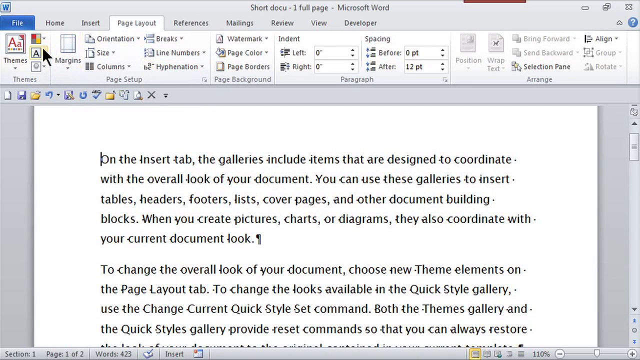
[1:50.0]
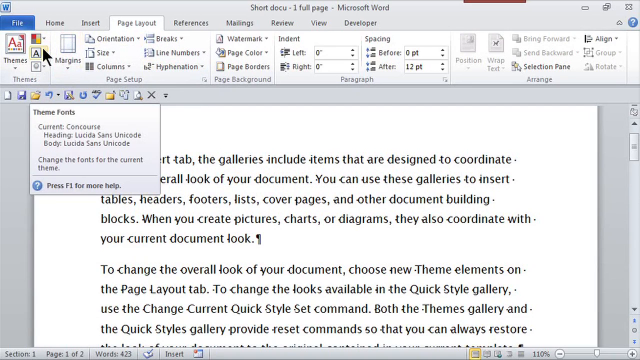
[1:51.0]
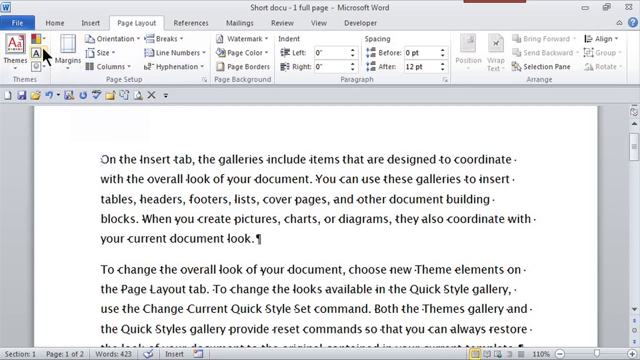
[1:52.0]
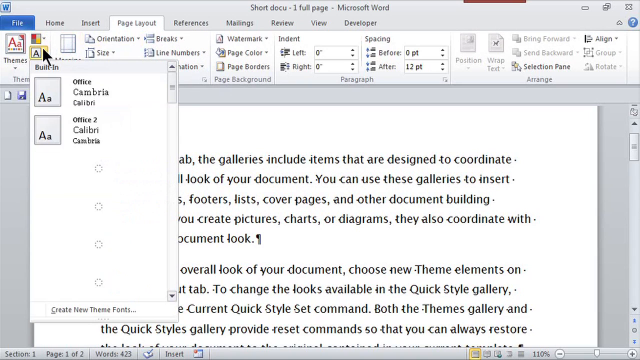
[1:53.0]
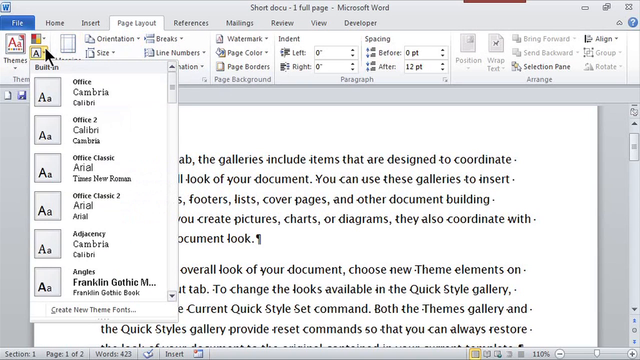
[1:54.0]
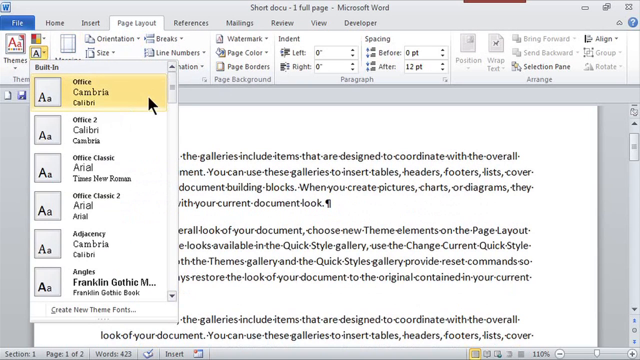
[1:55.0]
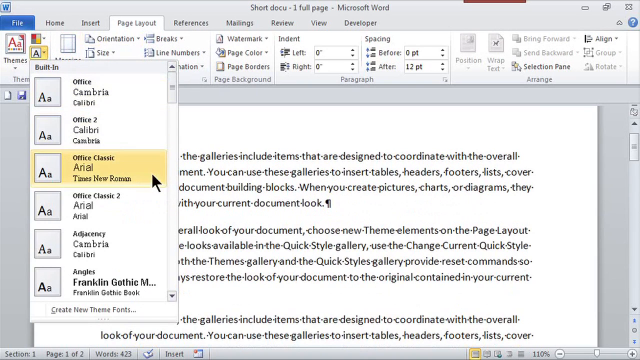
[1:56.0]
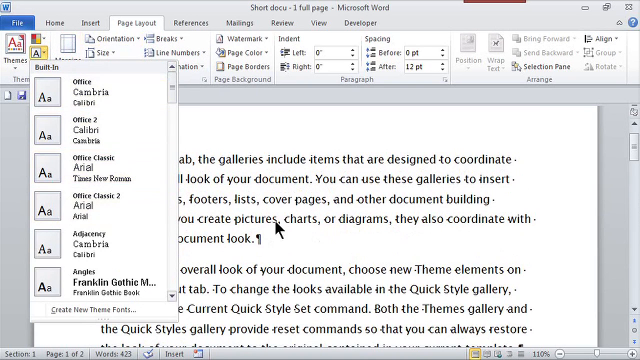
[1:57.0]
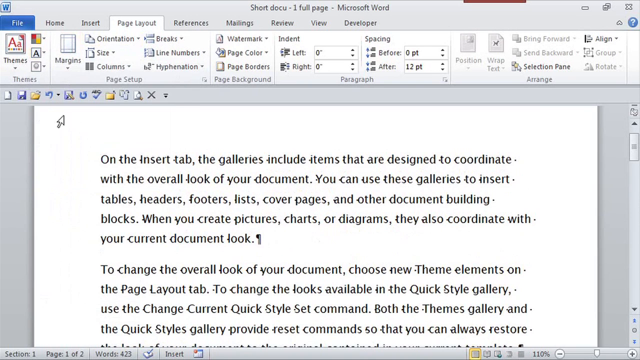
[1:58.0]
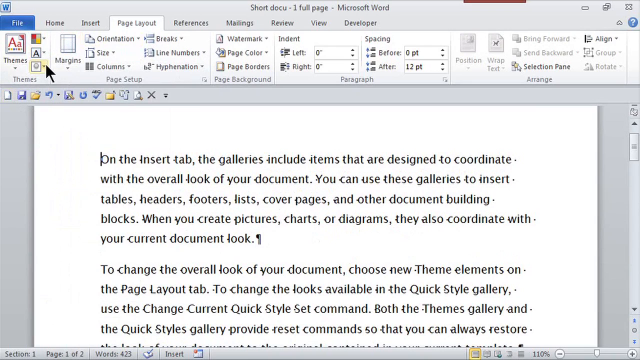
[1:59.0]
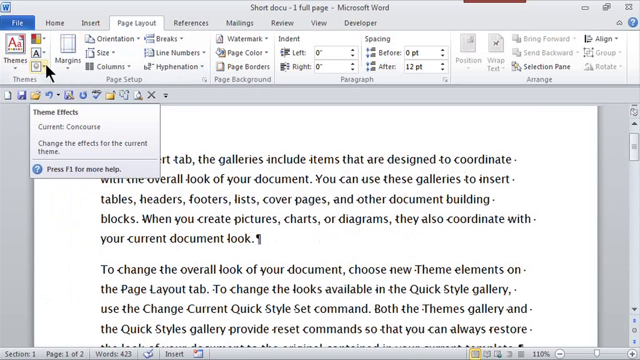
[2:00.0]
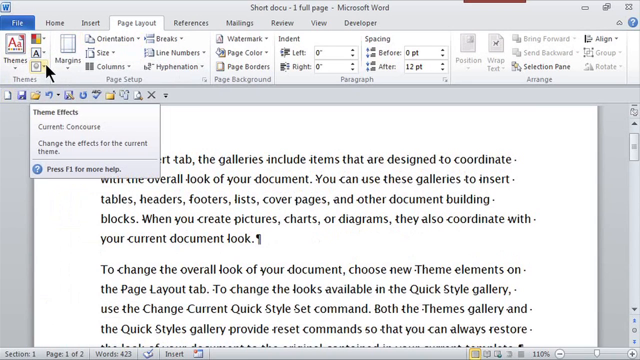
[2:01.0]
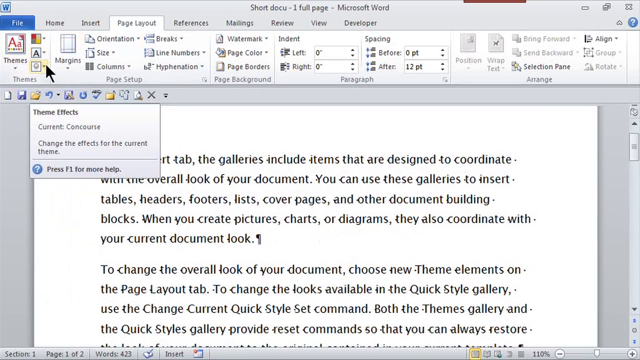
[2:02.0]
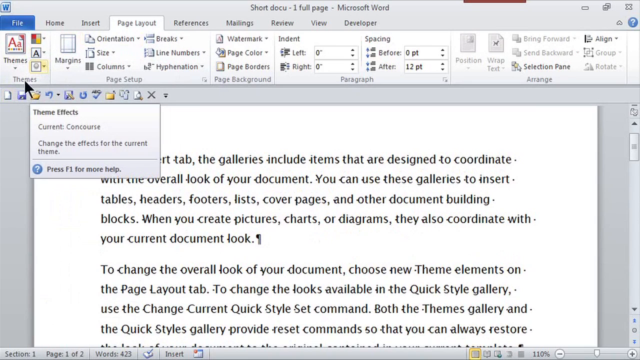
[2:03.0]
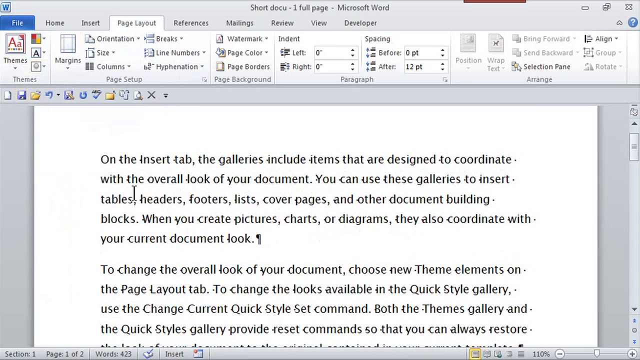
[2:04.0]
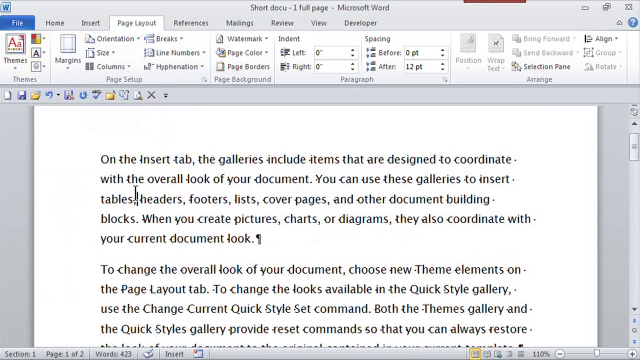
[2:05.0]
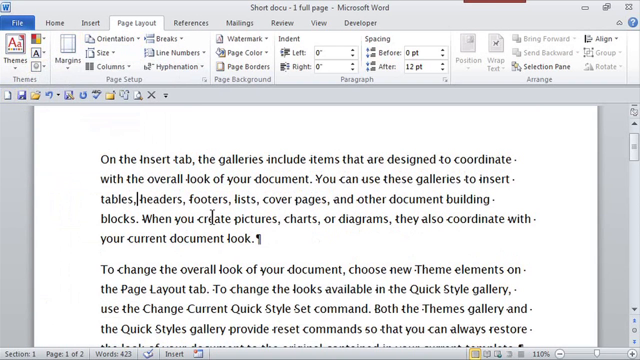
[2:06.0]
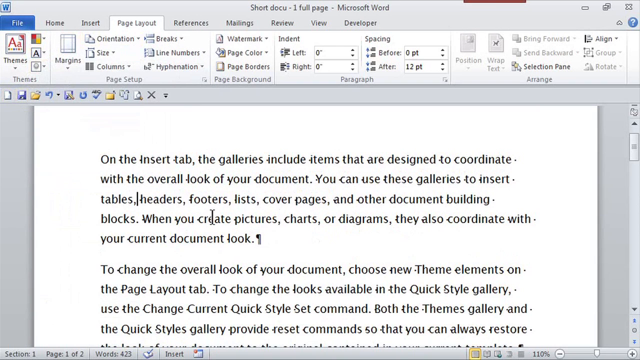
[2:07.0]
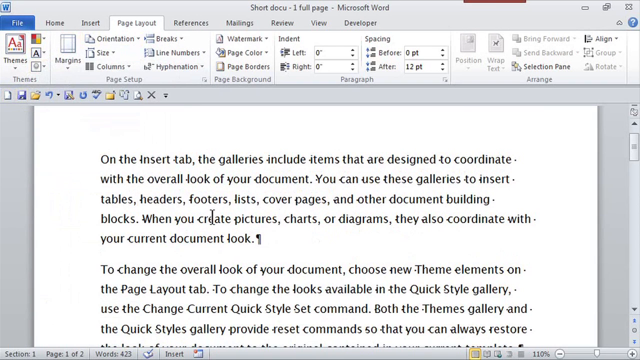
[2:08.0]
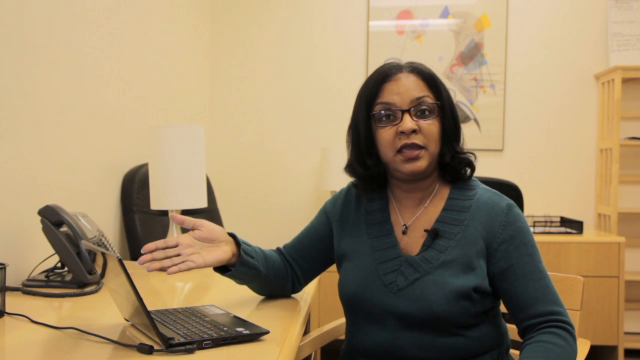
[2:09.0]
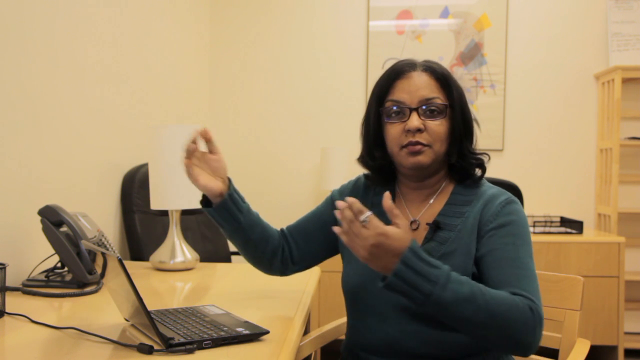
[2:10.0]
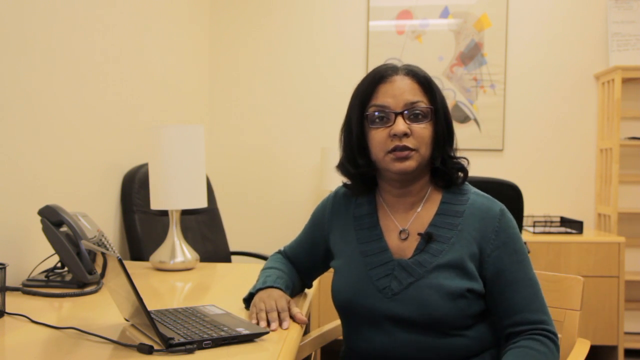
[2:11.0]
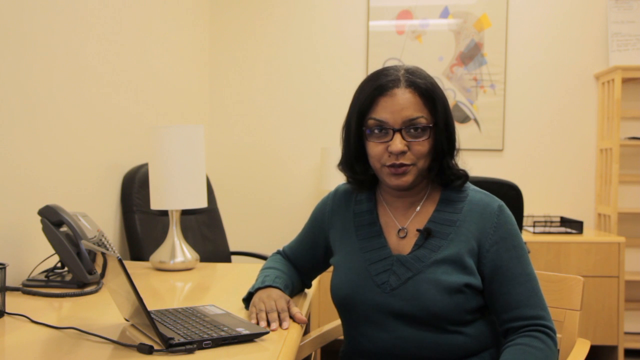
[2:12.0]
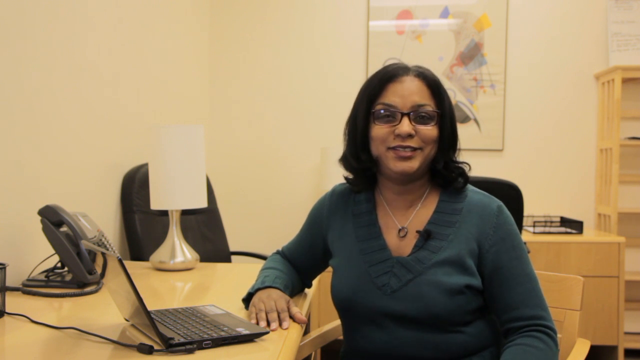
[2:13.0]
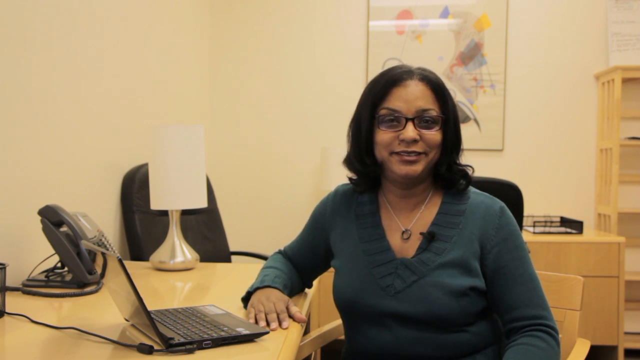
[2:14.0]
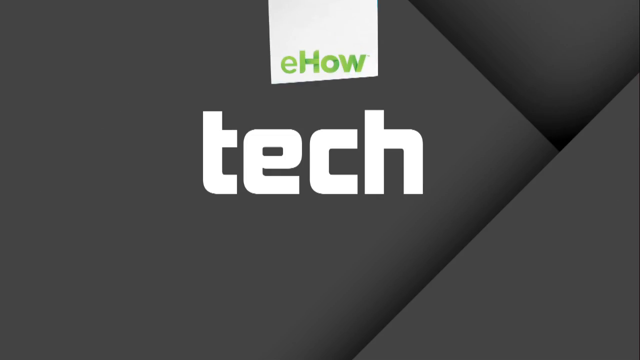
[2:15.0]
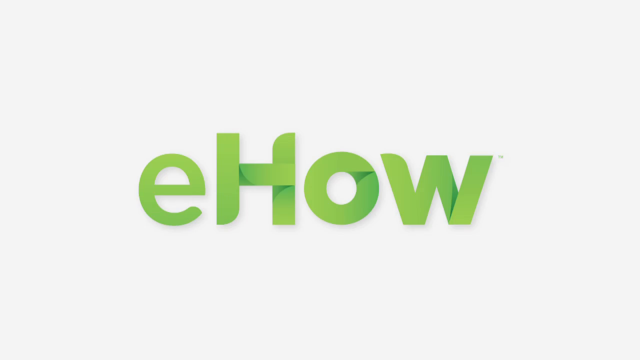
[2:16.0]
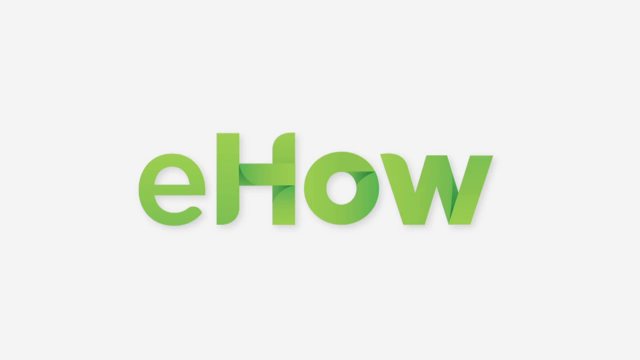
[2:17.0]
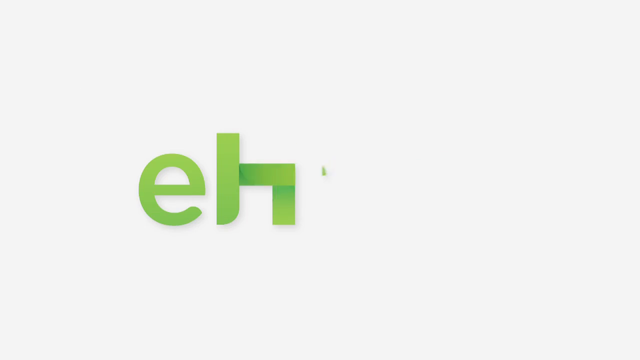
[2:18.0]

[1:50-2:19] Text about the galleries is shown: "The galleries include items that are designed to coordinate with the overall look of your document. You can use these galleries to insert tables, headers, footers, lists, and cover pages and other document building blocks. When you create pictures, charts, or diagrams, they also coordinate with your current document look."